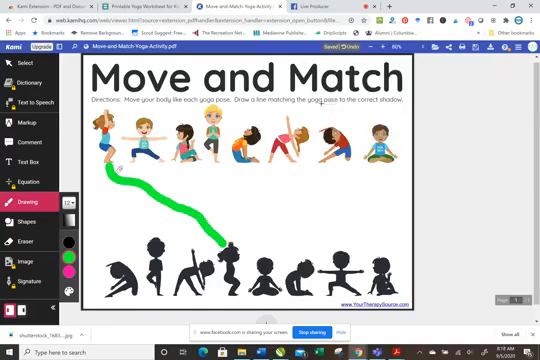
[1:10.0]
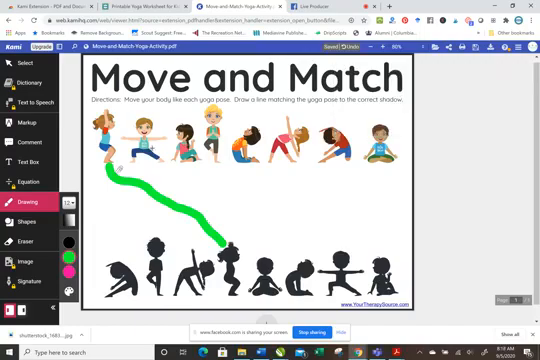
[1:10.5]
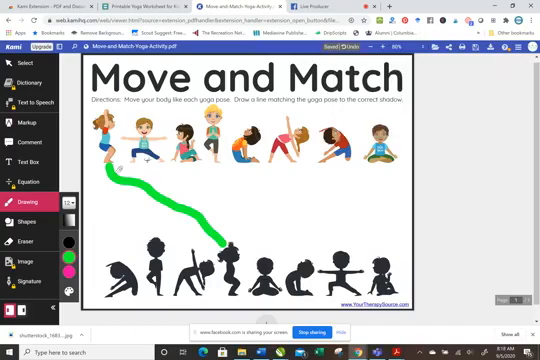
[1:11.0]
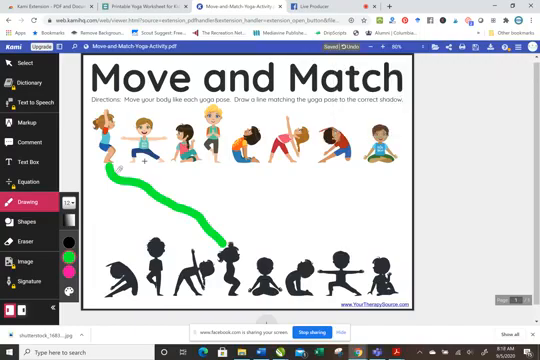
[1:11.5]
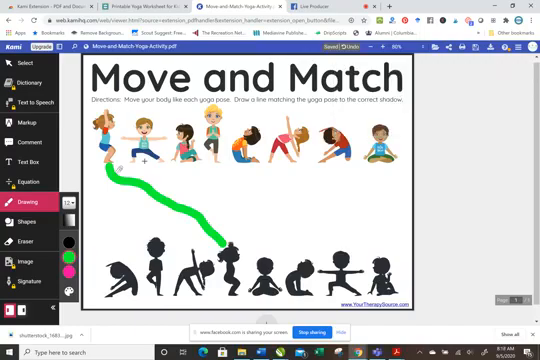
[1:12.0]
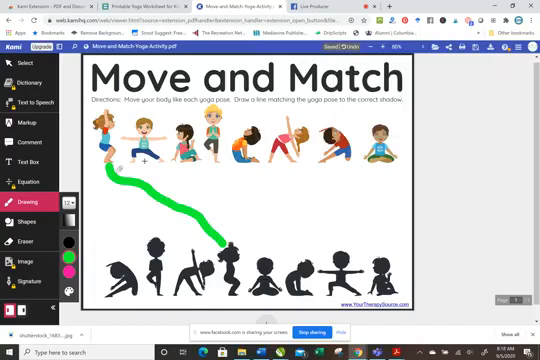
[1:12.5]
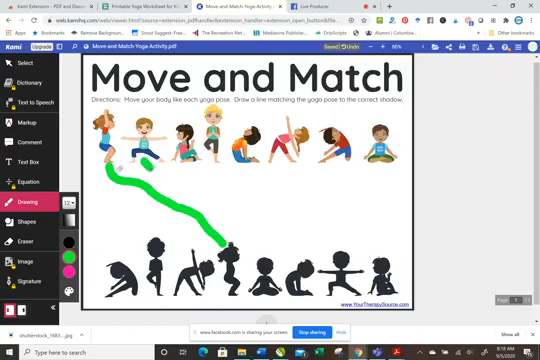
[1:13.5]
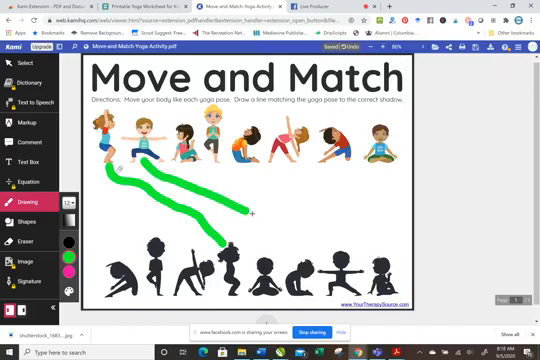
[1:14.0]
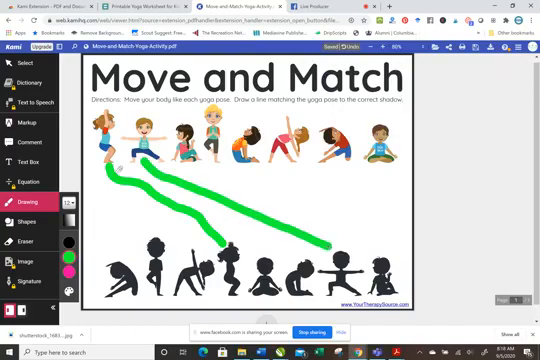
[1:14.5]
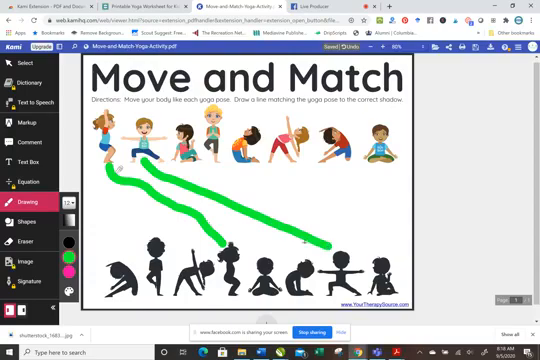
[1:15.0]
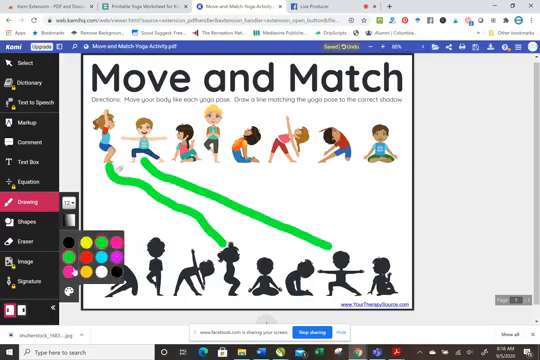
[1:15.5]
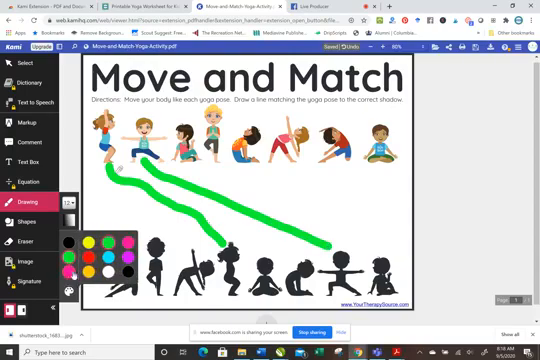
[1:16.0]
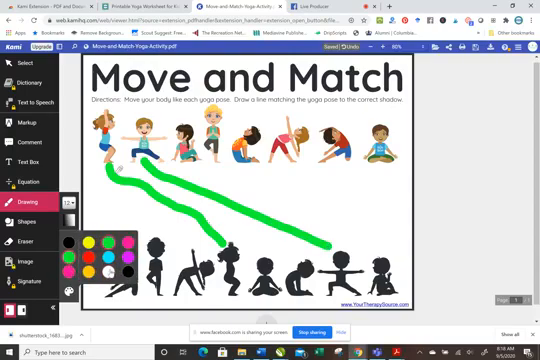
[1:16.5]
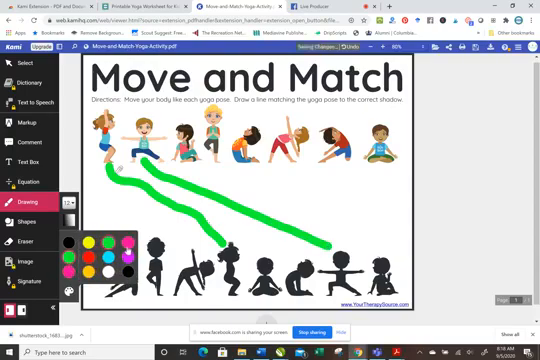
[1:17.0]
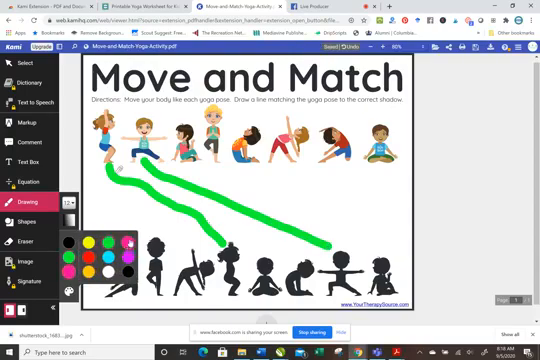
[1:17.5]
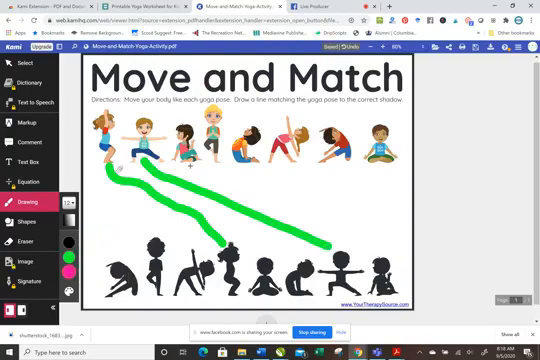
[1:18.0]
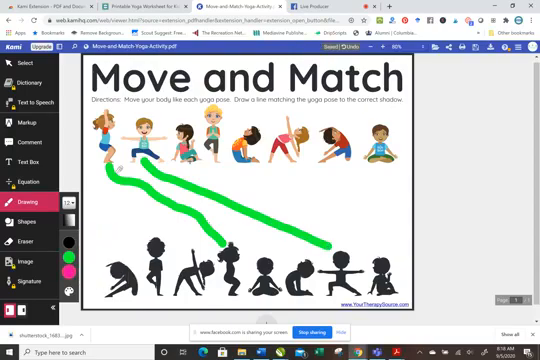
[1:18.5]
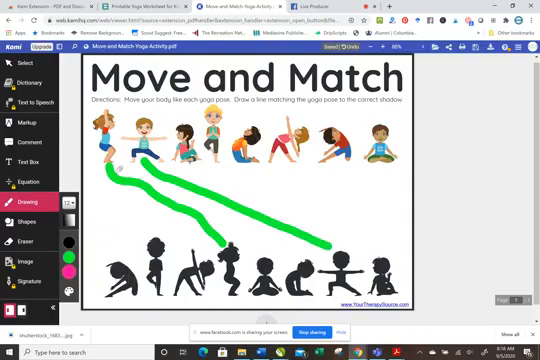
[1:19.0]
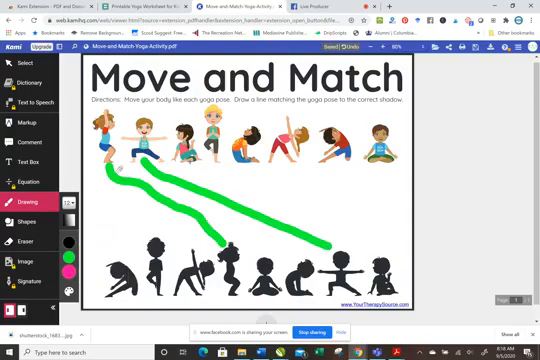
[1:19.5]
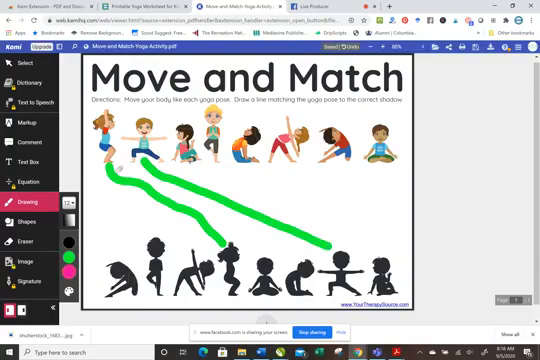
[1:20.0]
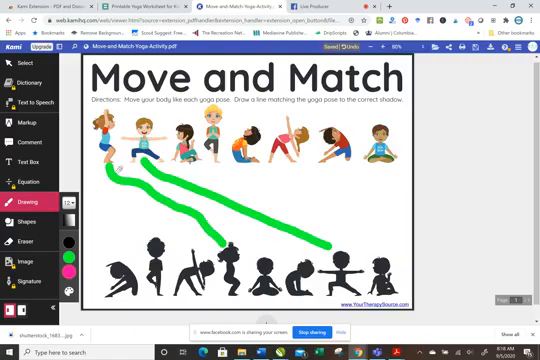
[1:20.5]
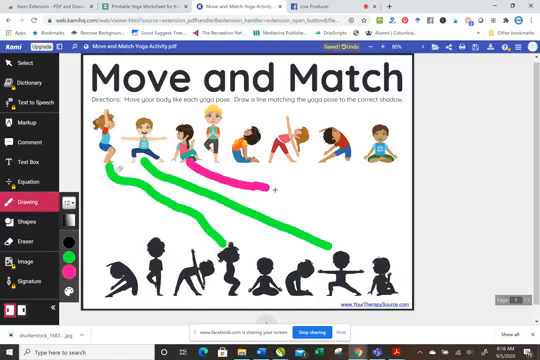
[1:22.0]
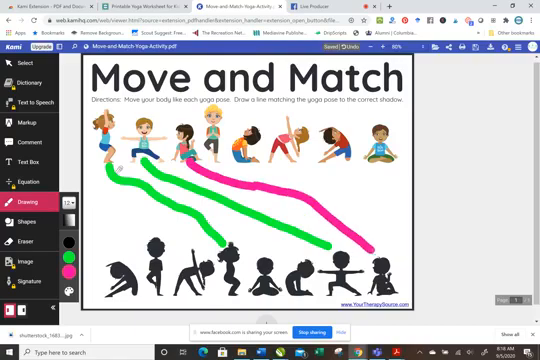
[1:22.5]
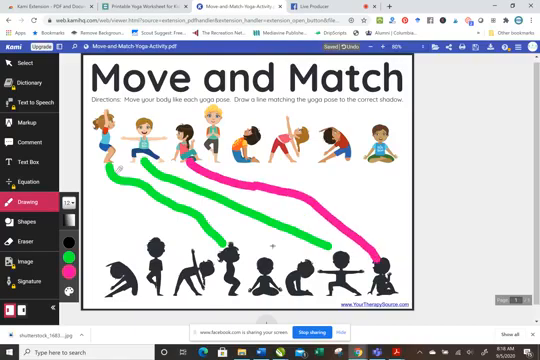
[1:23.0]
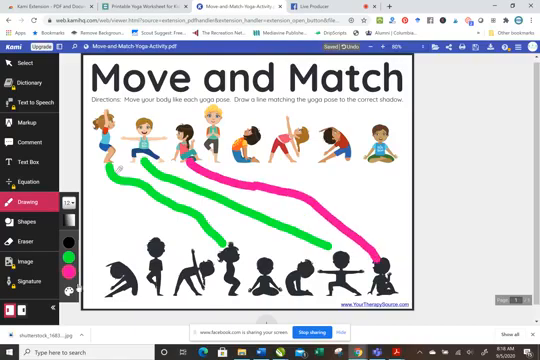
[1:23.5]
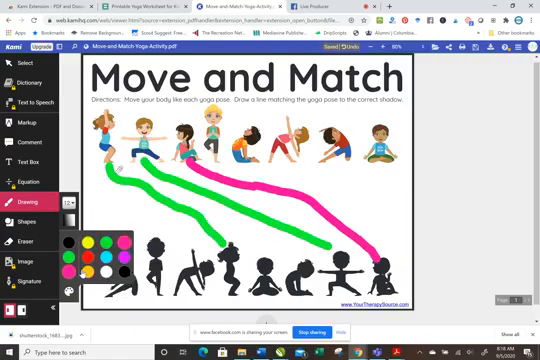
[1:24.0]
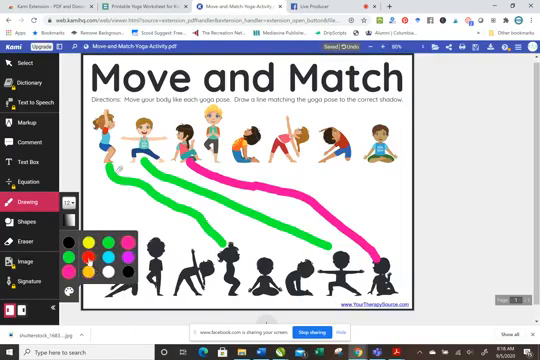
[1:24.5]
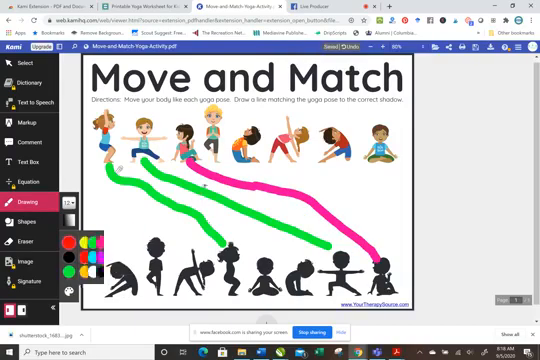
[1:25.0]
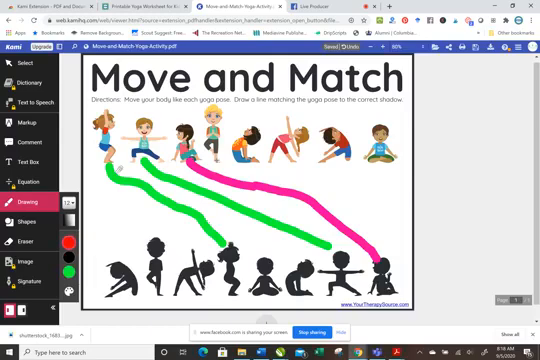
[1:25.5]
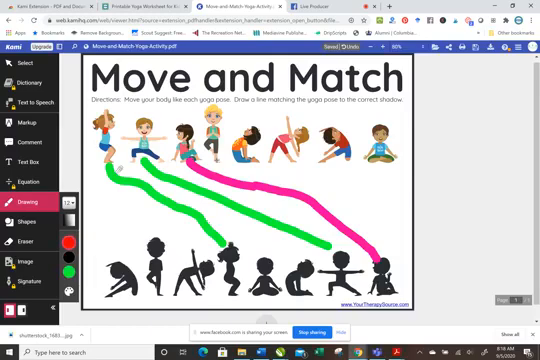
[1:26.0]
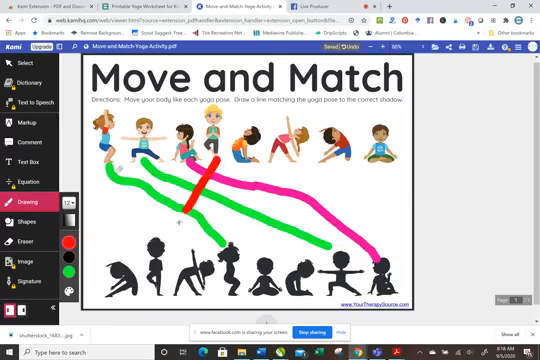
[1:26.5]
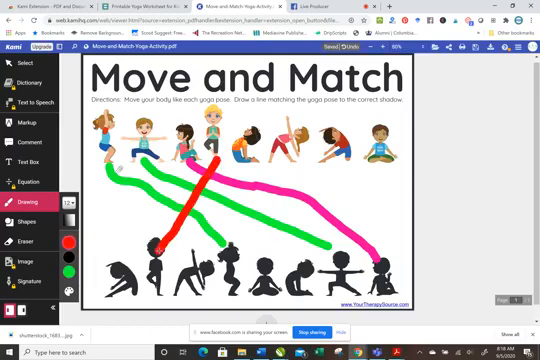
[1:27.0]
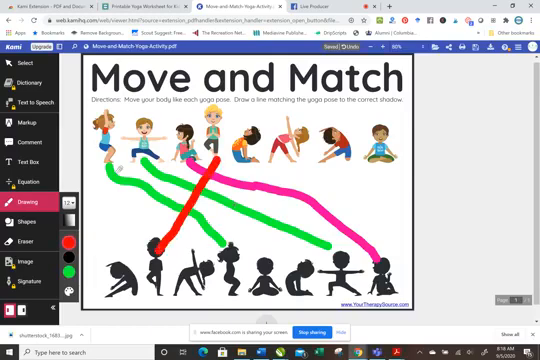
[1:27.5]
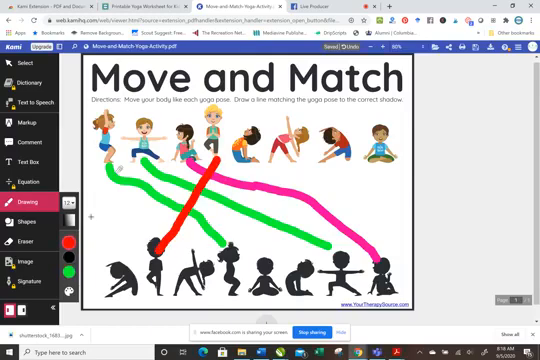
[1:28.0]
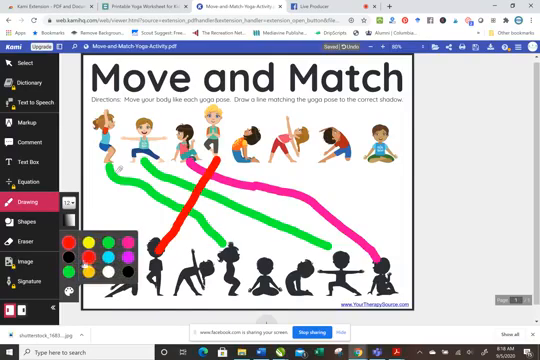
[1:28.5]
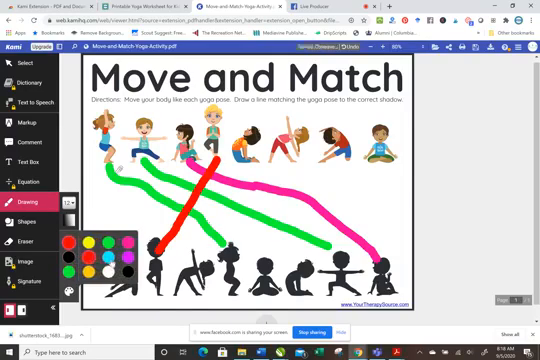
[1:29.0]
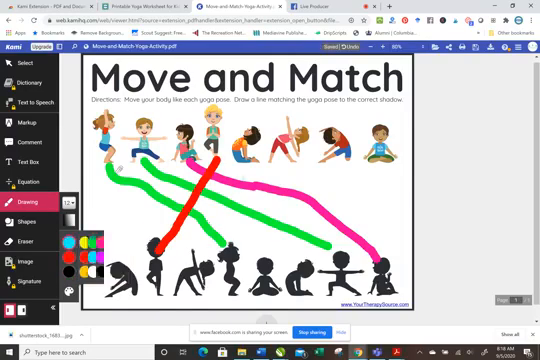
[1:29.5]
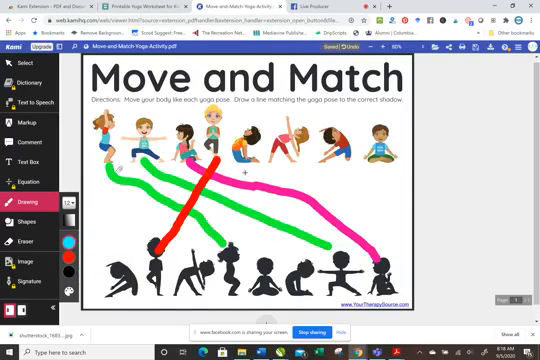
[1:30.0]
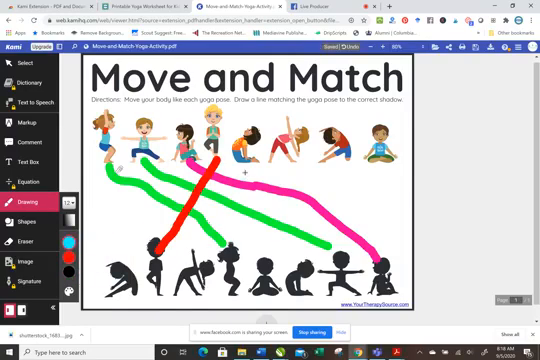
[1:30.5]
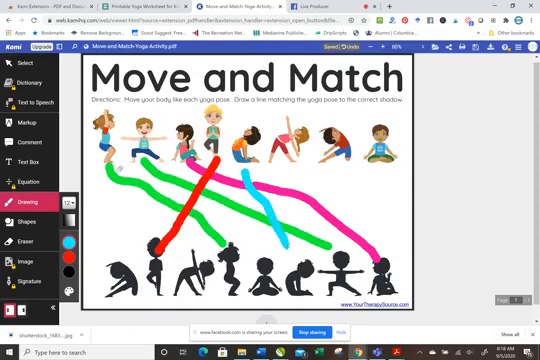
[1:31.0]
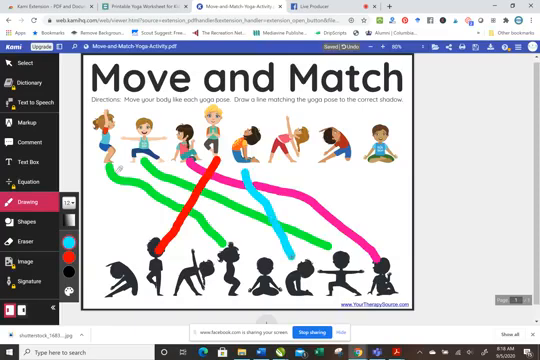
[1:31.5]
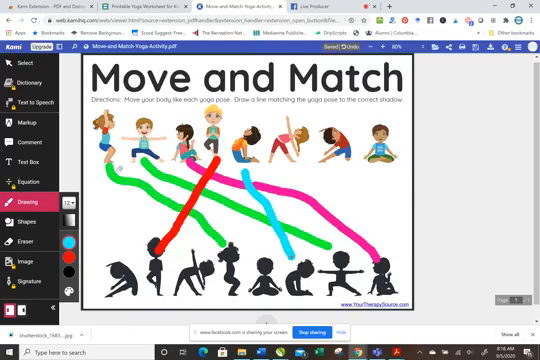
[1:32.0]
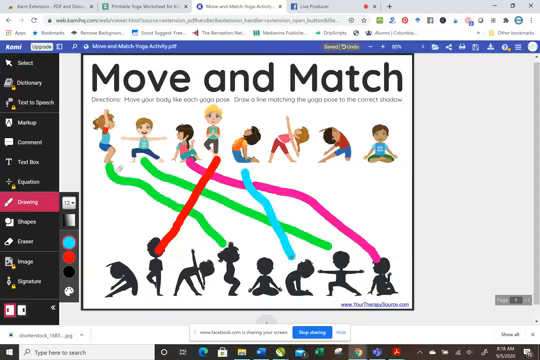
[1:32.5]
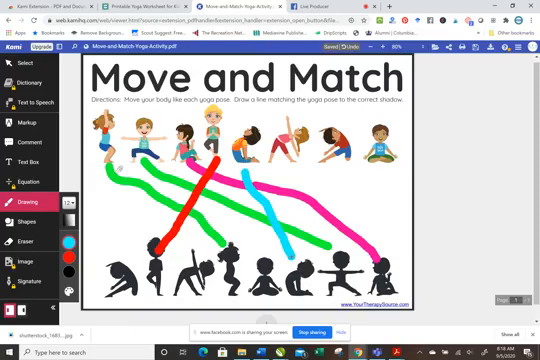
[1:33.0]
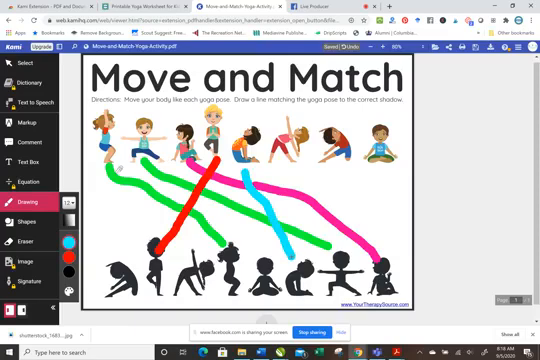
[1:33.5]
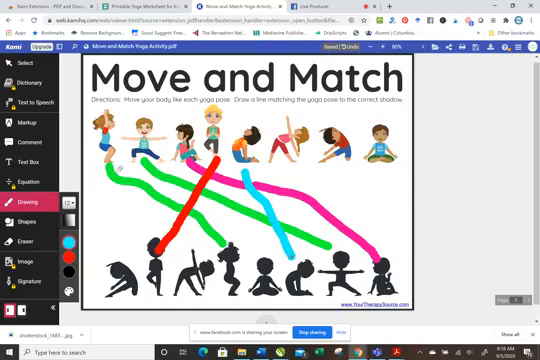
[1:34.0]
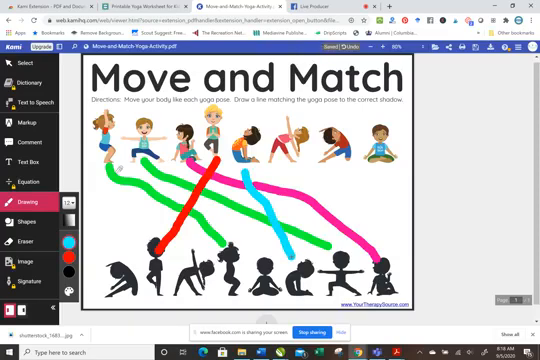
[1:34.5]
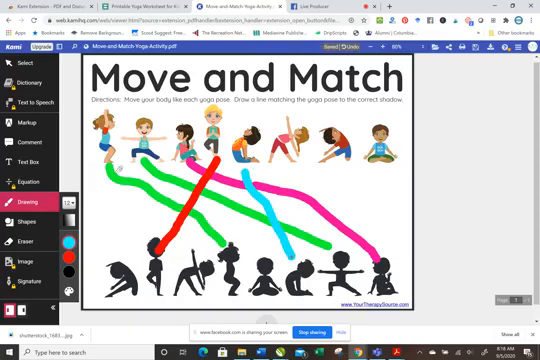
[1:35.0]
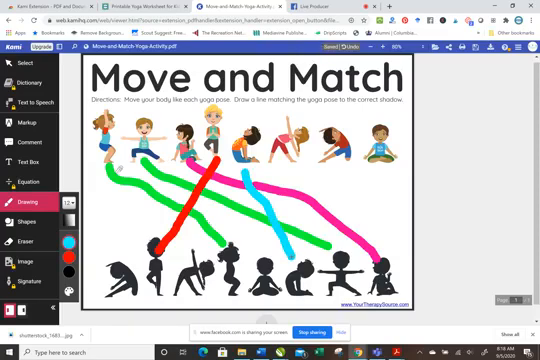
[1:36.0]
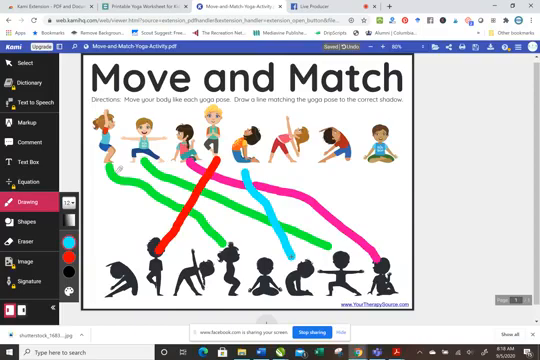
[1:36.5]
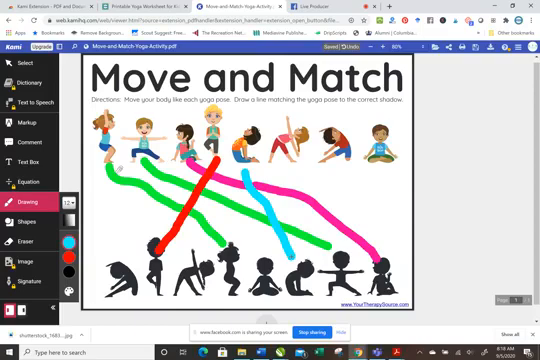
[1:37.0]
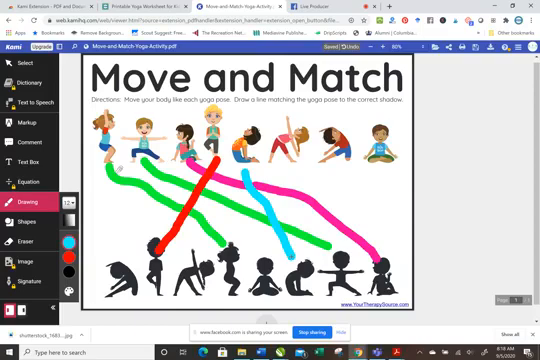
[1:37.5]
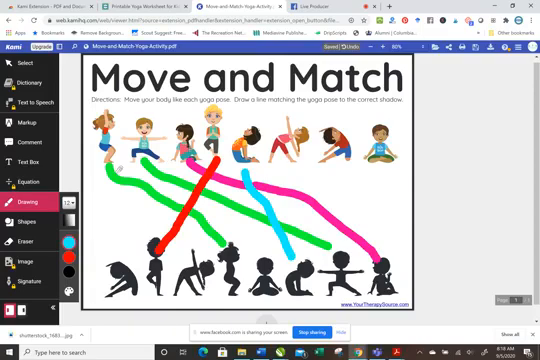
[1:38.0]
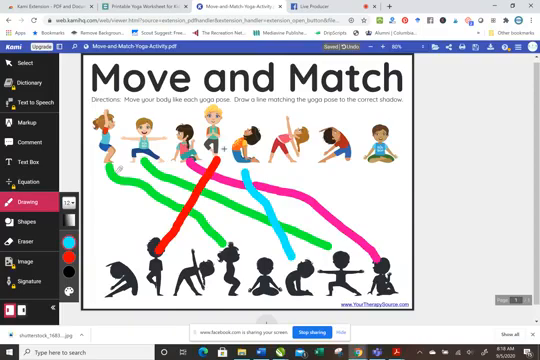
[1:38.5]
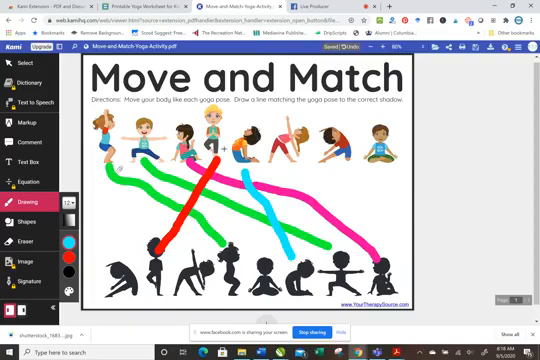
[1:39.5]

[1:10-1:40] The Kami webpage is open with the printable yoga PDF, called Move and Match, on it. The person on their laptop matches the characters performing yoga to their shadow poses. The first two lines are drawn in green, the third in pink, the fourth in red, and the fifth in light blue. Kami resembles a photoshop website; its top bar is blue with white lettering and offers options to zoom in or out on the PDF, save and share it, and upgrade the service.